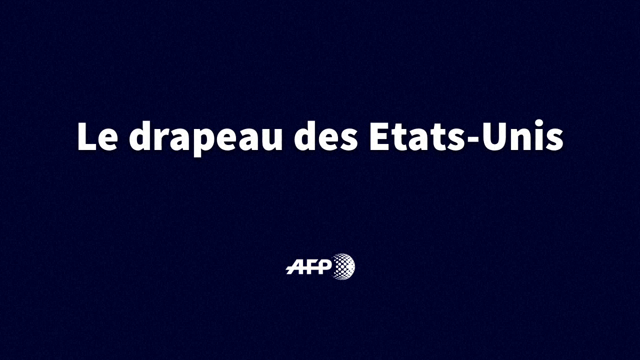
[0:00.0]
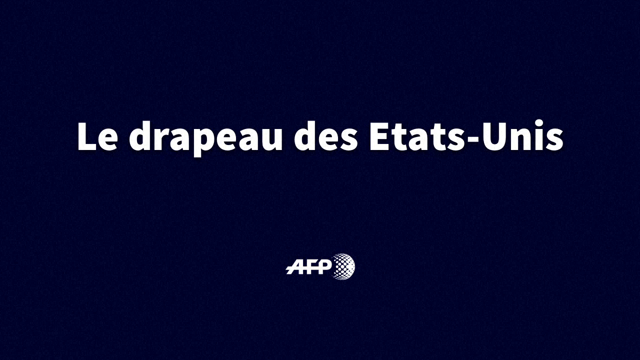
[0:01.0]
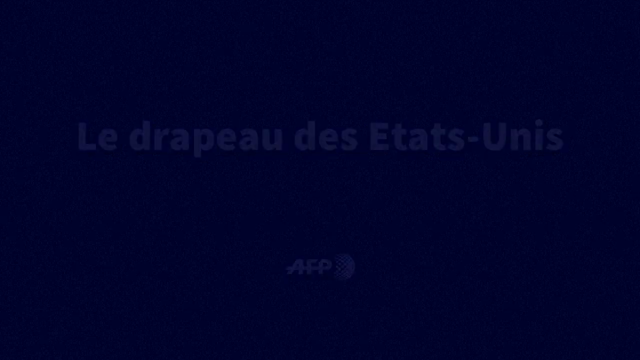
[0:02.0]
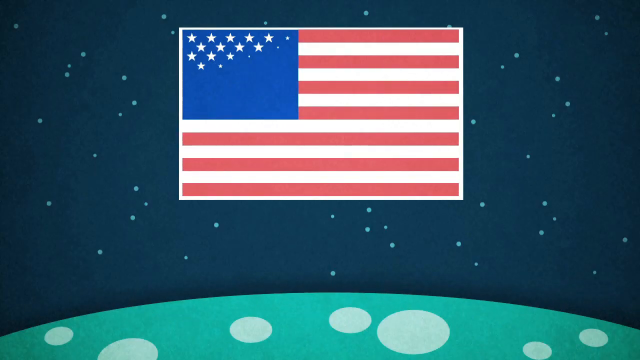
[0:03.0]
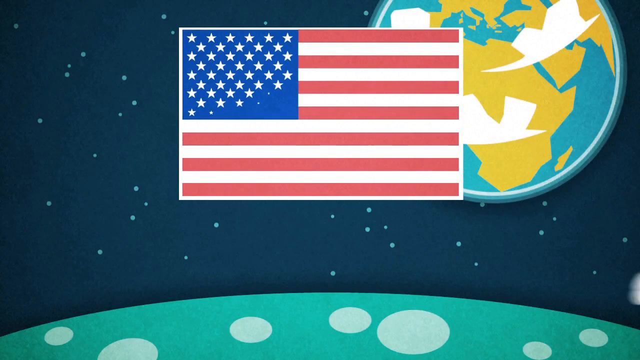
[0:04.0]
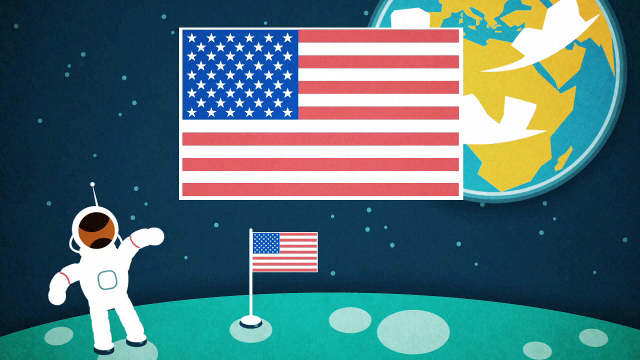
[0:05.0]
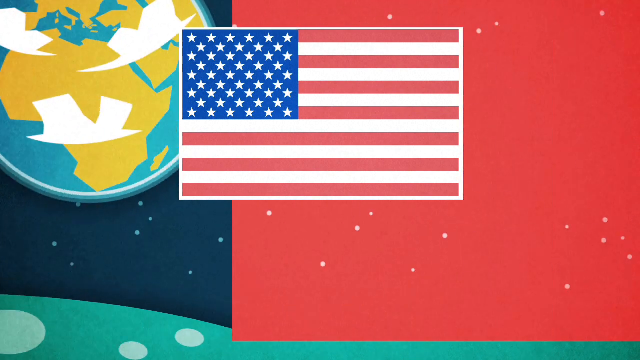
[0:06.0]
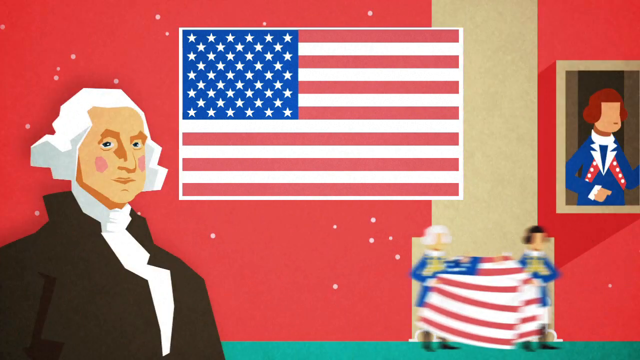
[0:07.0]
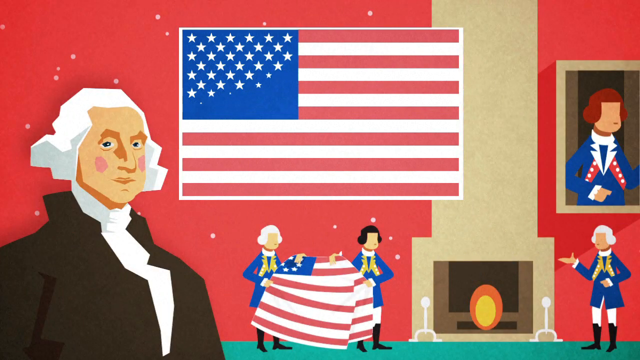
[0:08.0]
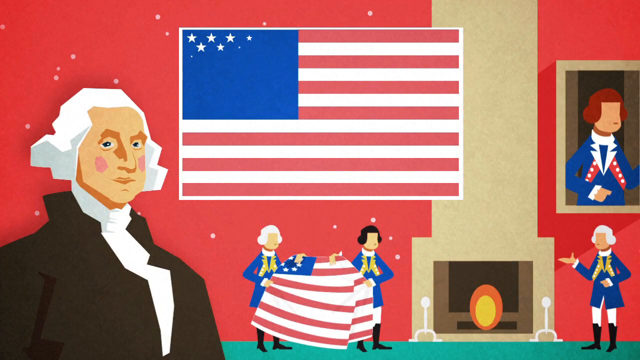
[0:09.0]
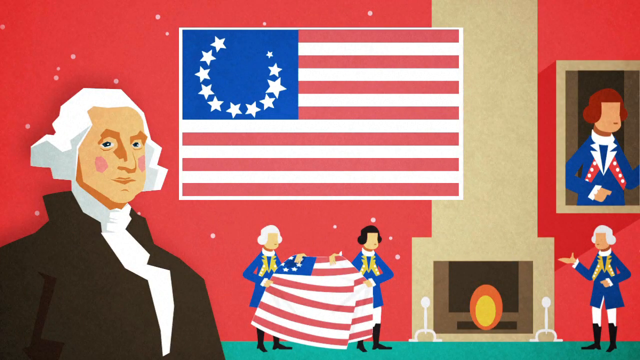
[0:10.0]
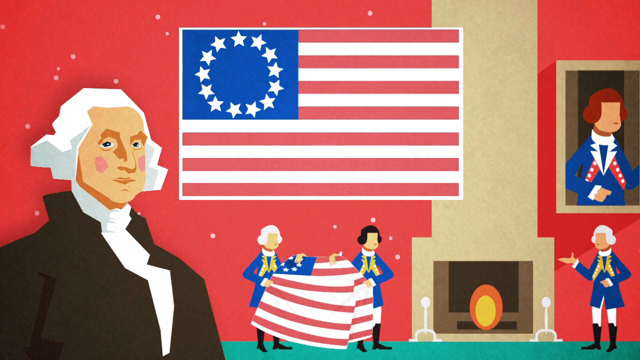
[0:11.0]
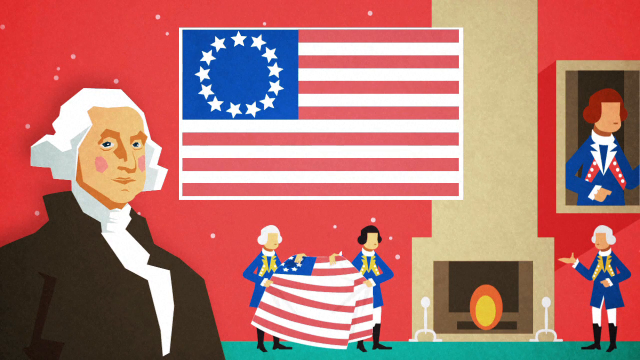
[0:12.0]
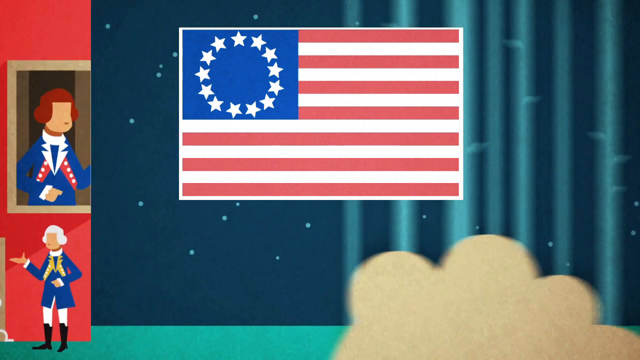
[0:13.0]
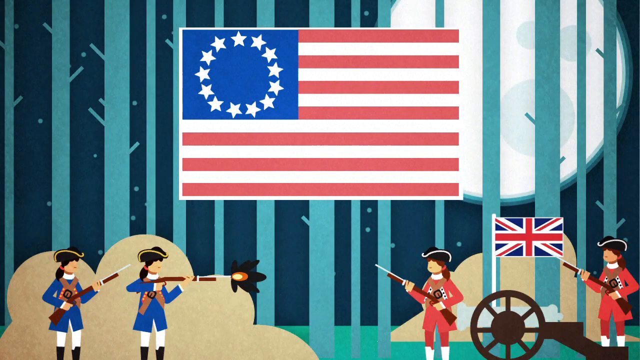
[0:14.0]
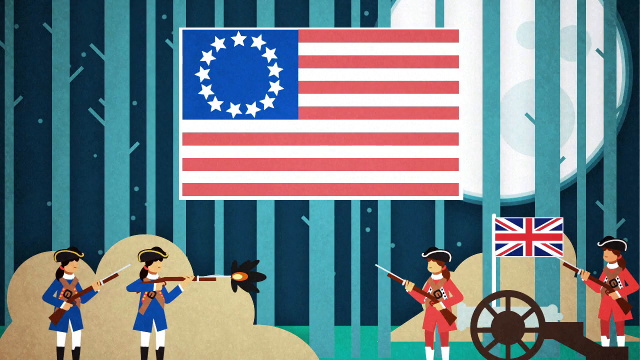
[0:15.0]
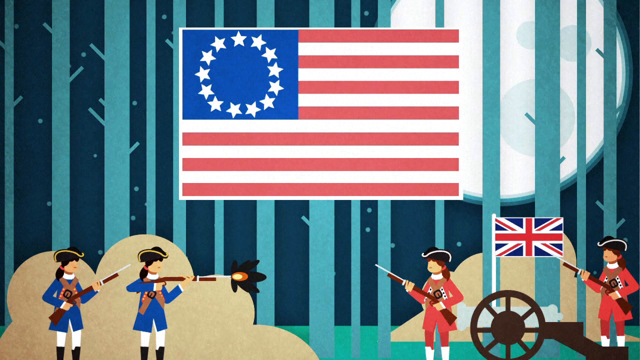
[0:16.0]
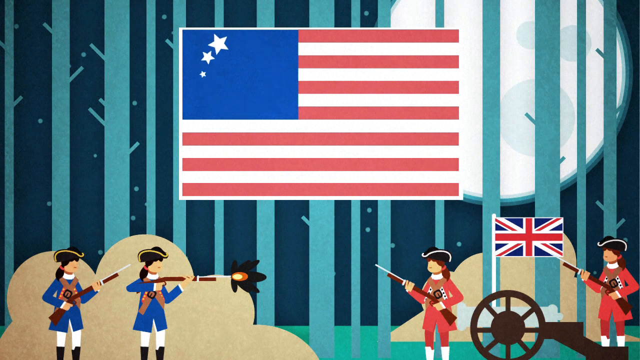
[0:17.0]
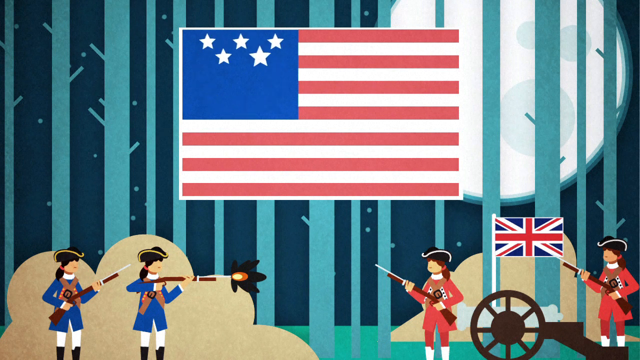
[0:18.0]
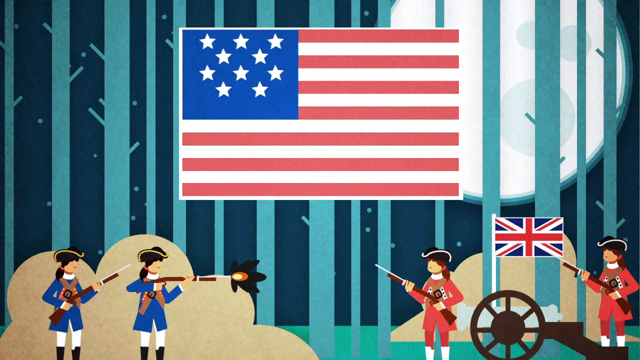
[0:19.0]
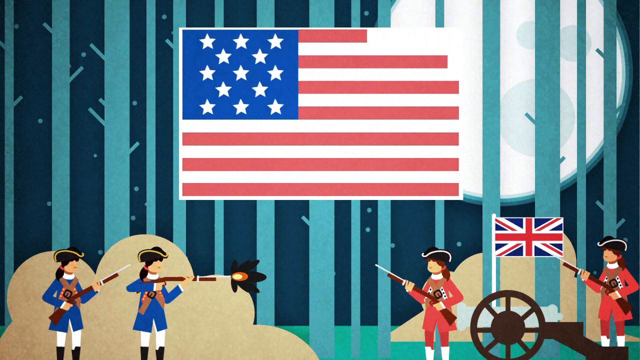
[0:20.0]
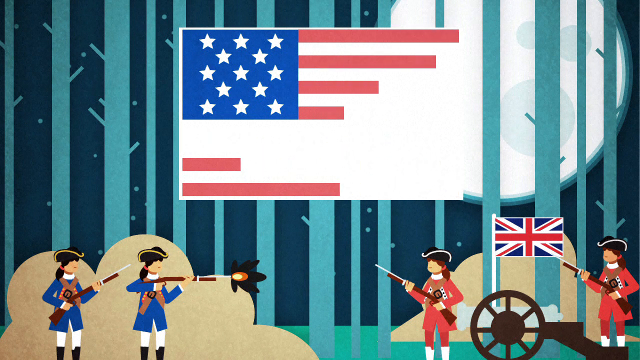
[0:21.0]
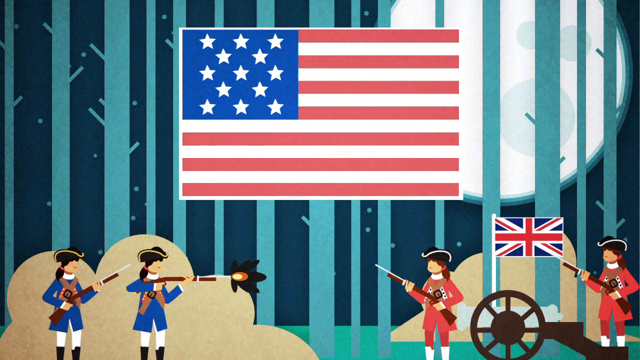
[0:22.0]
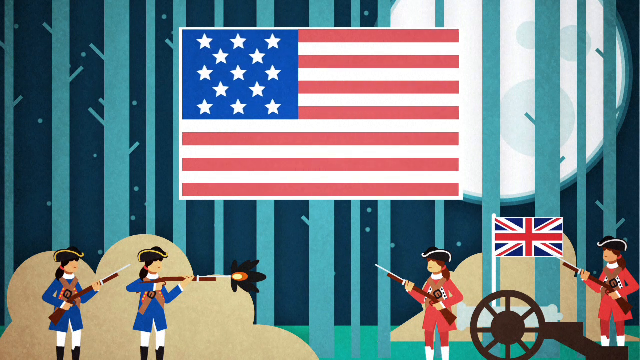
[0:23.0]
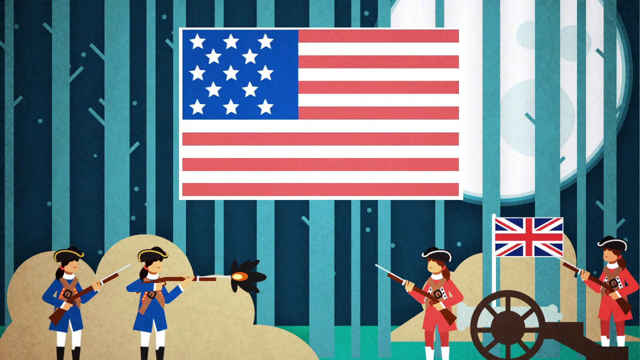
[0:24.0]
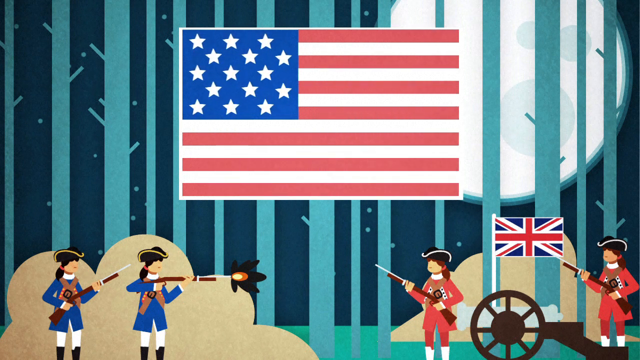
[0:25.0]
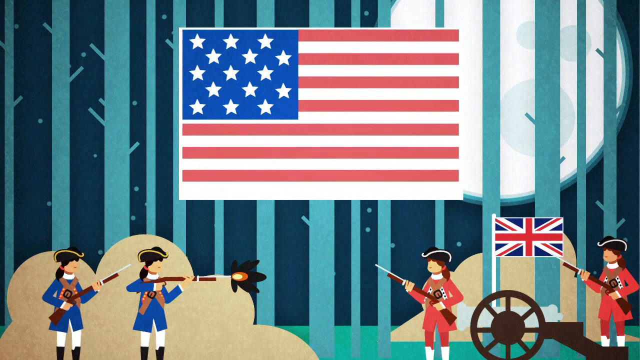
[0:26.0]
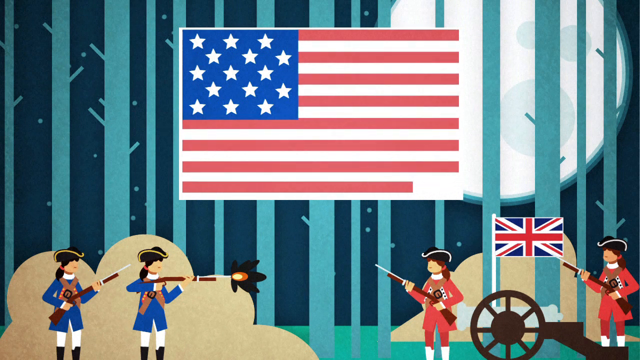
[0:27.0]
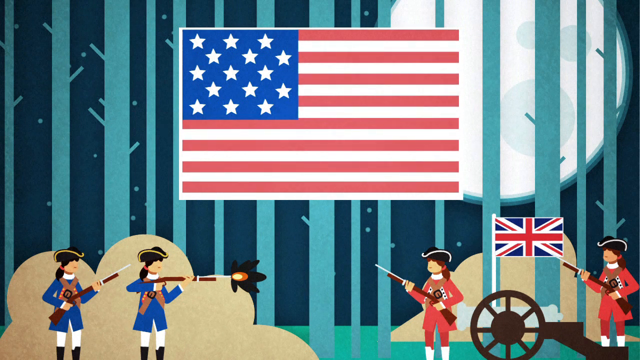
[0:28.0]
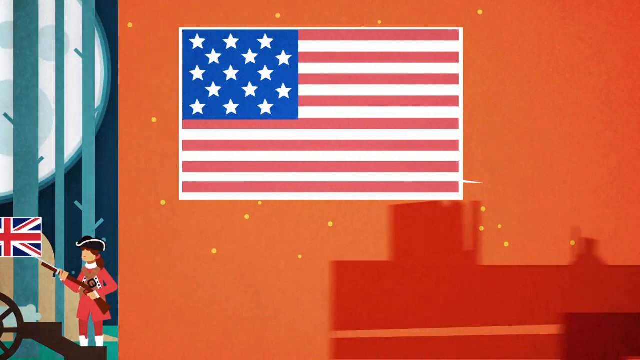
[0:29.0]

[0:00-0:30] The video opens with a black screen on which the words "Le Drapeau des Etats Unis" are written, in French. An animation of the American flag appears, with the stripes and the stars popping up. Below the flag is the curvature of the moon, with an astronaut and an American flag stationed on the moon. In the upper right is an illustration of the globe of the earth. The animation changes: the large American flag in the middle remains on the screen, while in the background George Washington appears on the left, along with two men dressed in the military wear of the 1770s seated on a table draped with the American flag. There is also a framed illustration of another man in the same military uniform. These are all colorful graphical illustrations, mostly in red and cream. Next, the flag's stars are shown as only 13 stars in a circle. Then men are shown firing at each other: the men on the left are dressed in the American uniform of the 1800s, and the men on the right are dressed in British uniform. A British flag is visible as the two sides shoot at each other.